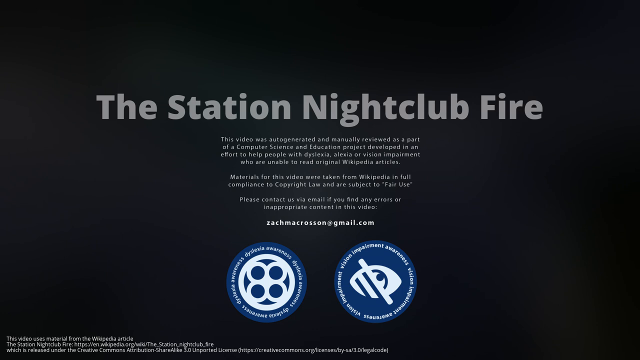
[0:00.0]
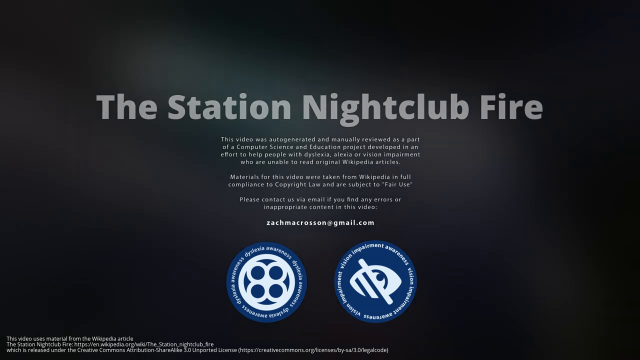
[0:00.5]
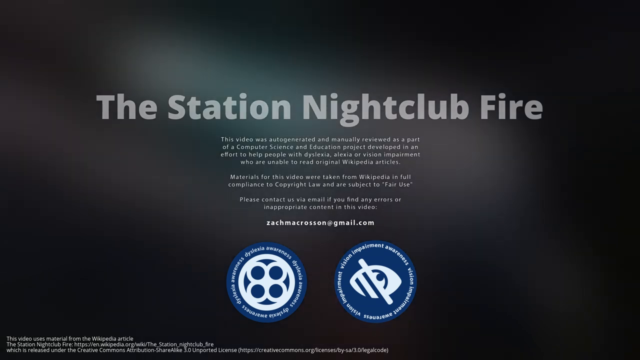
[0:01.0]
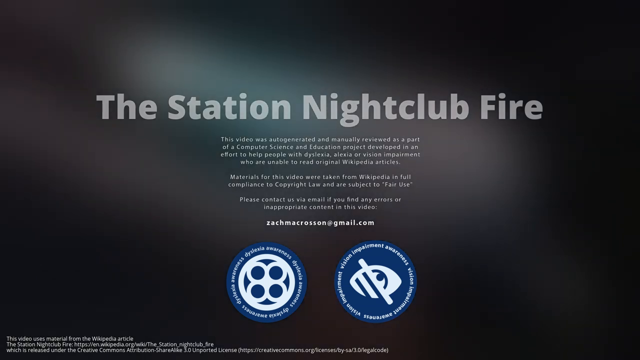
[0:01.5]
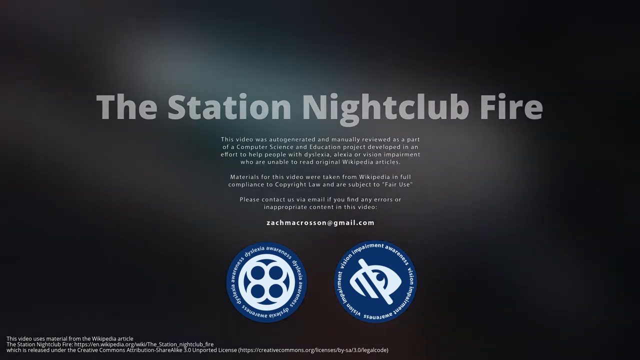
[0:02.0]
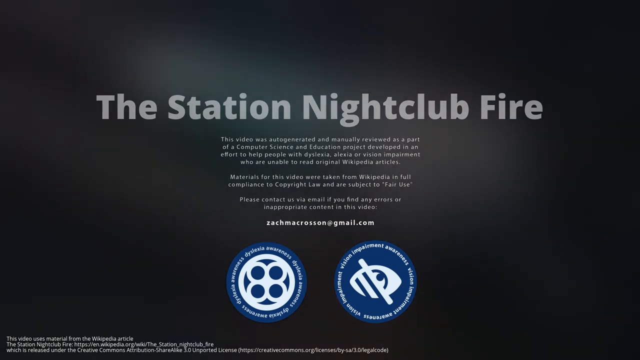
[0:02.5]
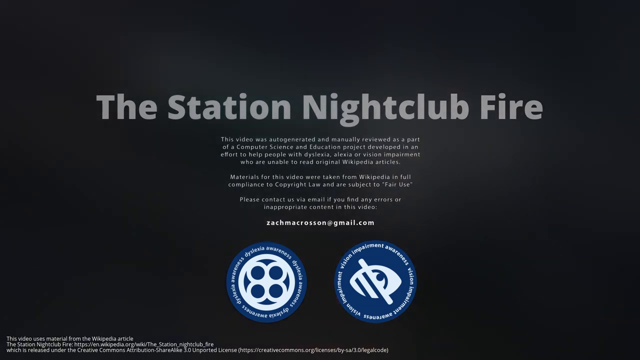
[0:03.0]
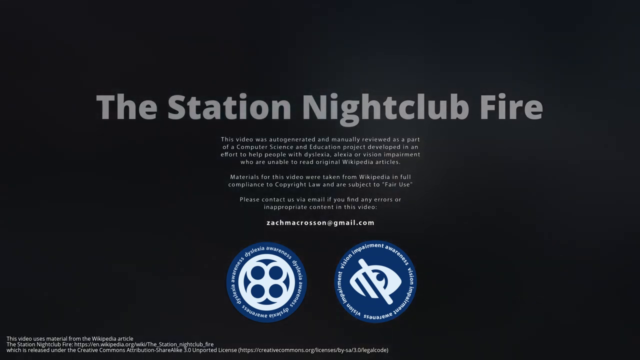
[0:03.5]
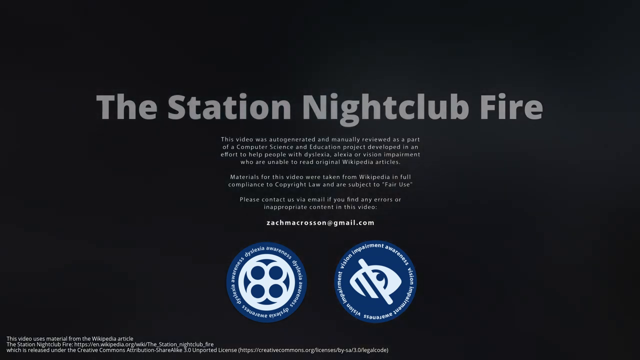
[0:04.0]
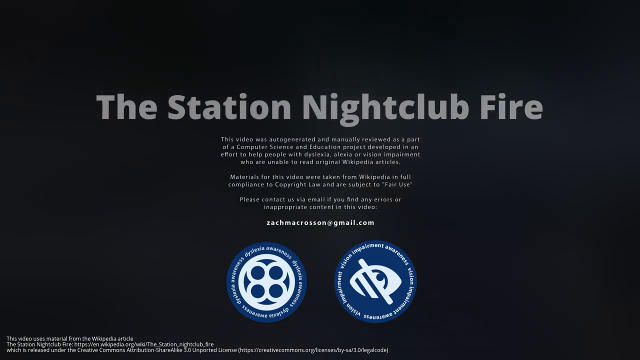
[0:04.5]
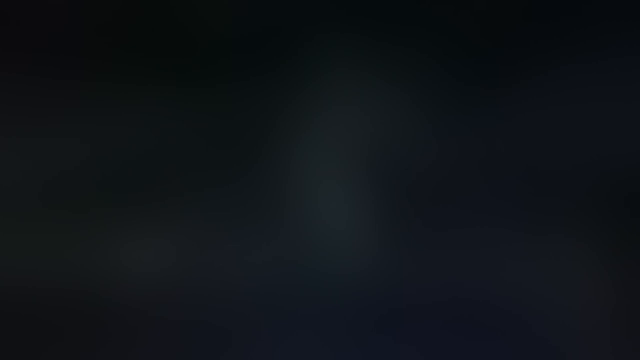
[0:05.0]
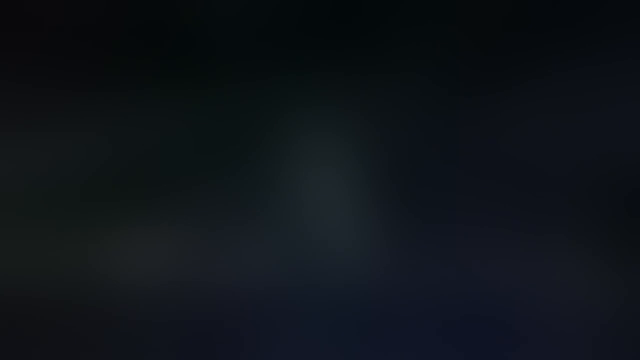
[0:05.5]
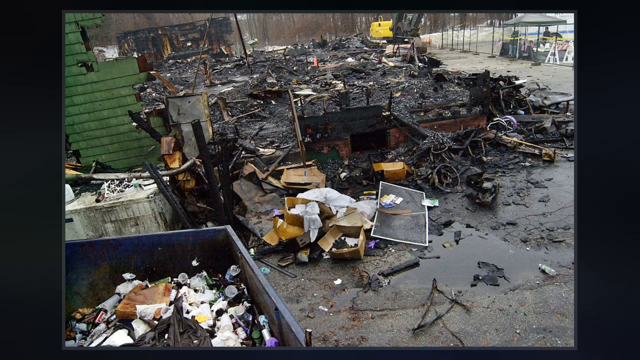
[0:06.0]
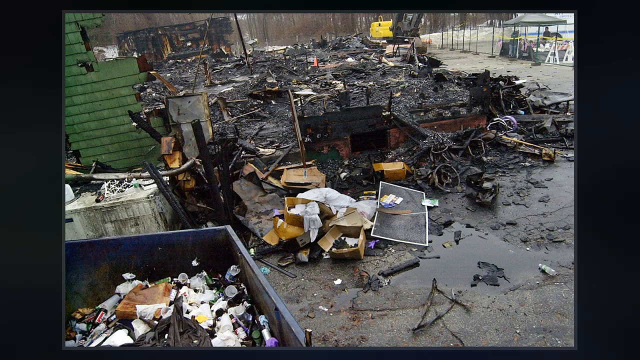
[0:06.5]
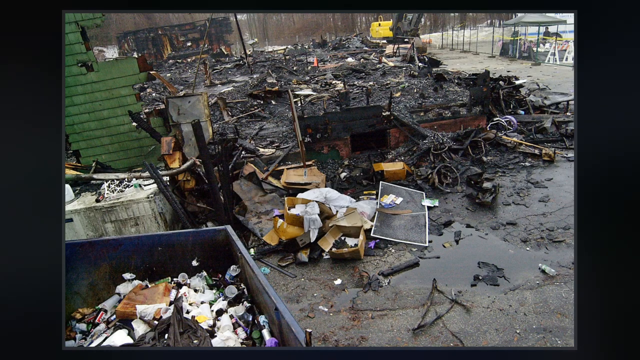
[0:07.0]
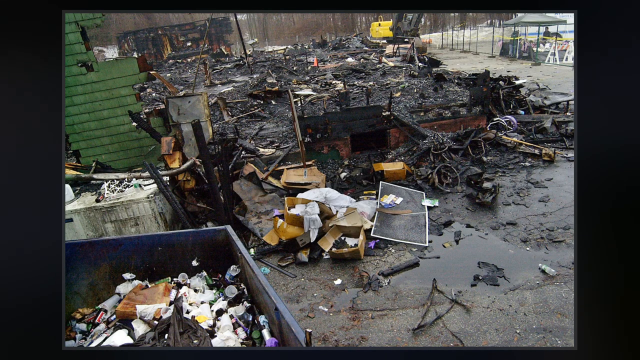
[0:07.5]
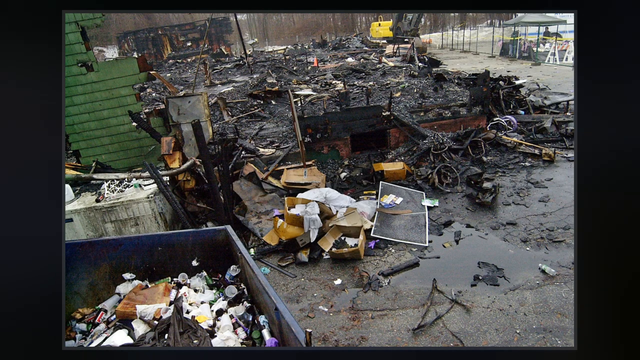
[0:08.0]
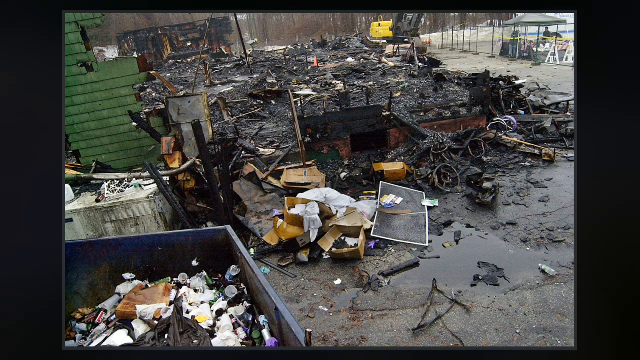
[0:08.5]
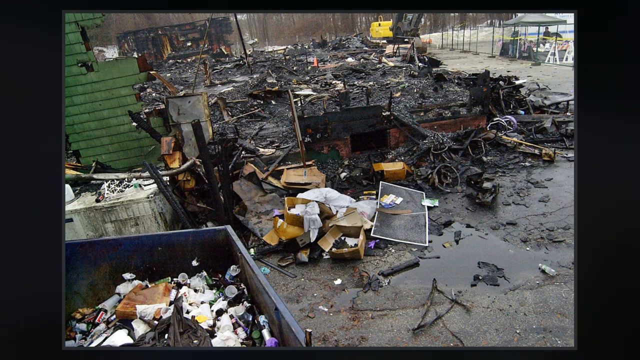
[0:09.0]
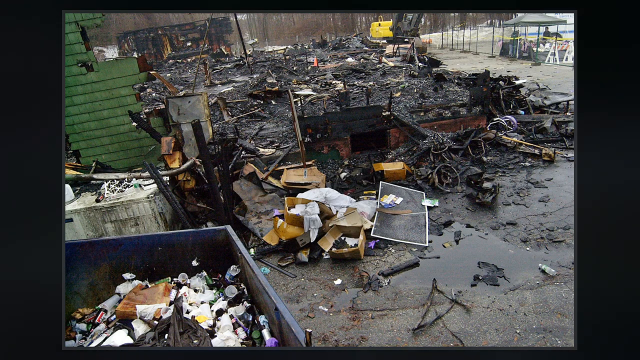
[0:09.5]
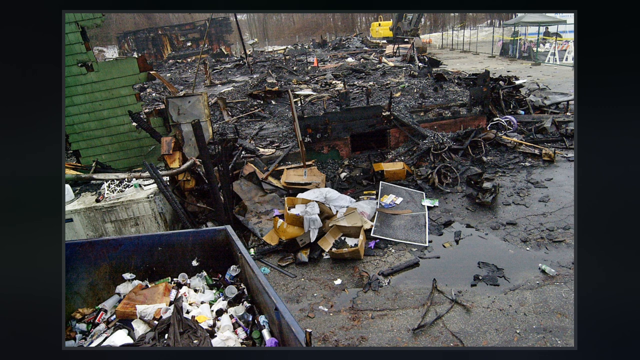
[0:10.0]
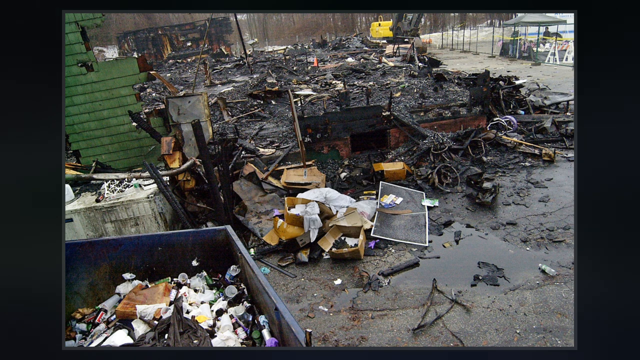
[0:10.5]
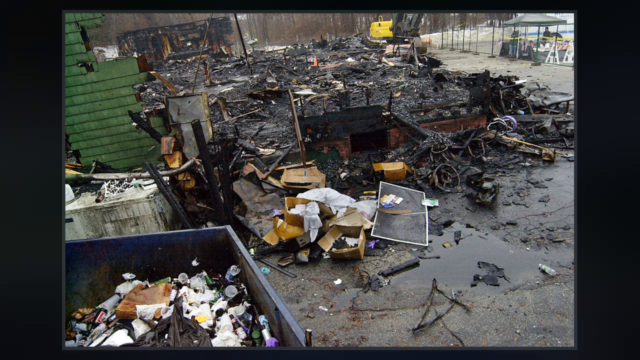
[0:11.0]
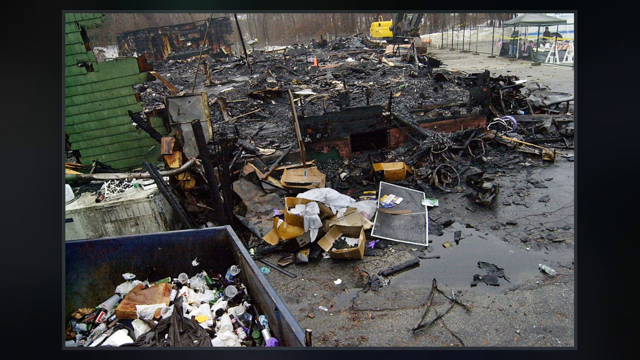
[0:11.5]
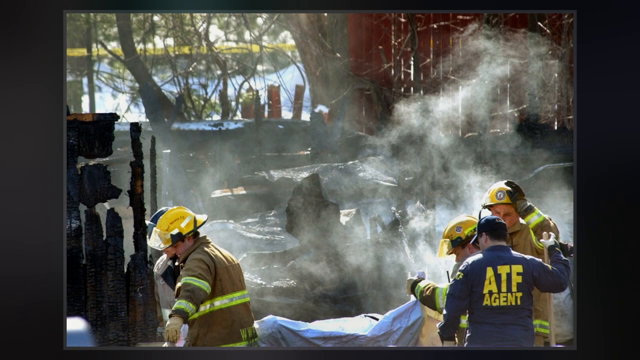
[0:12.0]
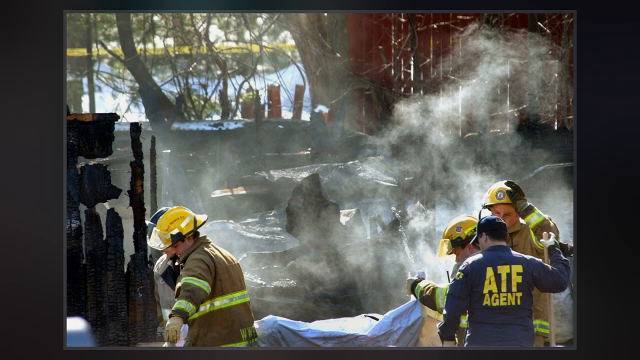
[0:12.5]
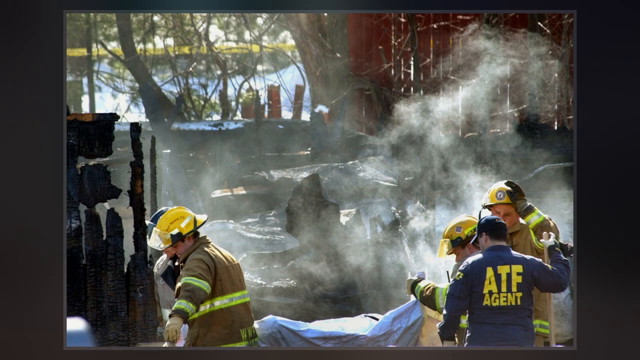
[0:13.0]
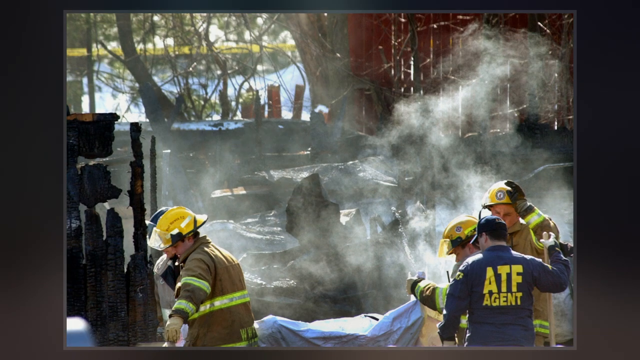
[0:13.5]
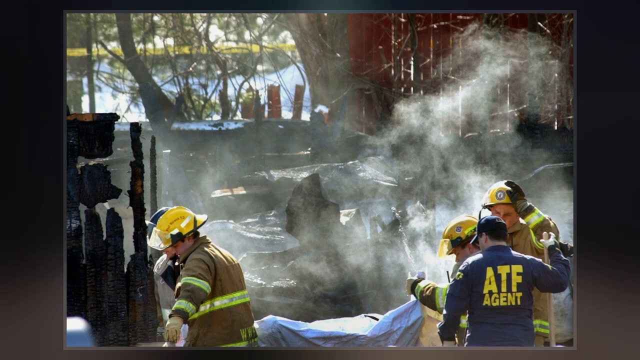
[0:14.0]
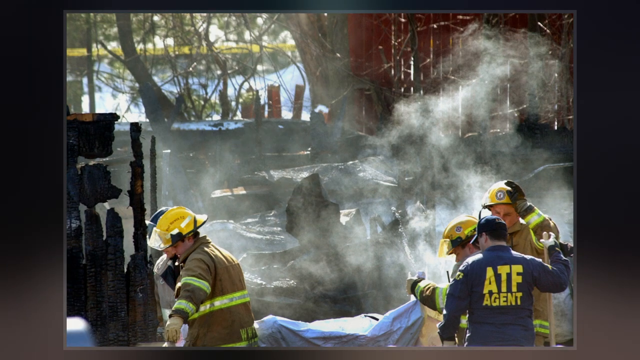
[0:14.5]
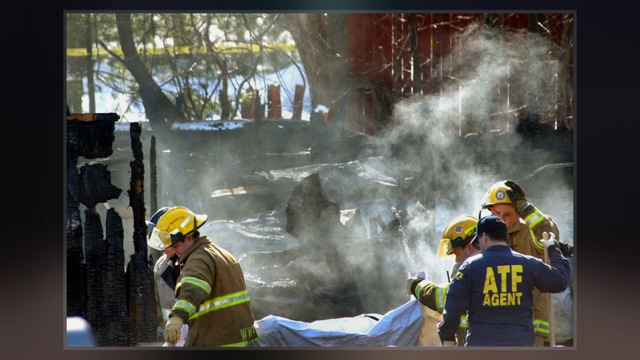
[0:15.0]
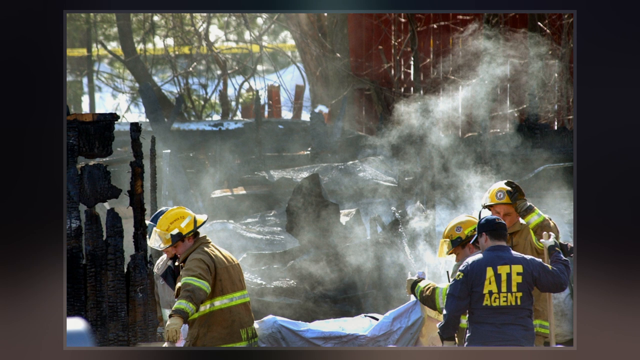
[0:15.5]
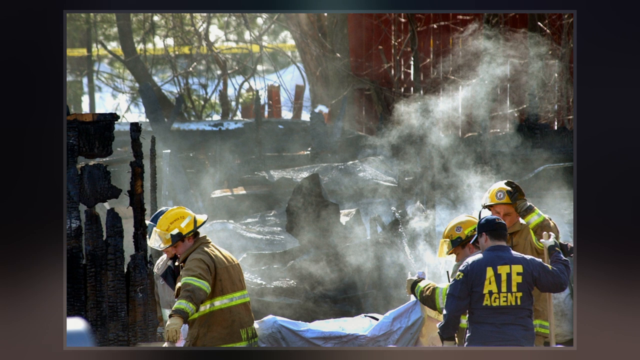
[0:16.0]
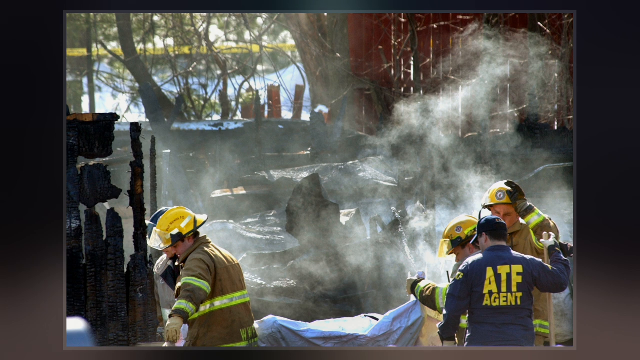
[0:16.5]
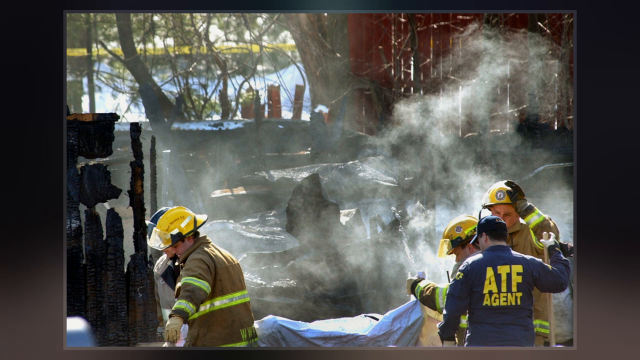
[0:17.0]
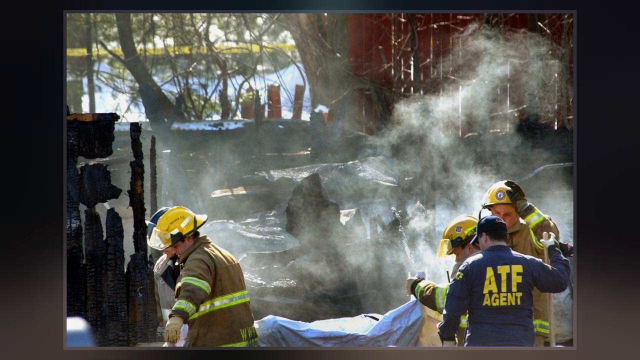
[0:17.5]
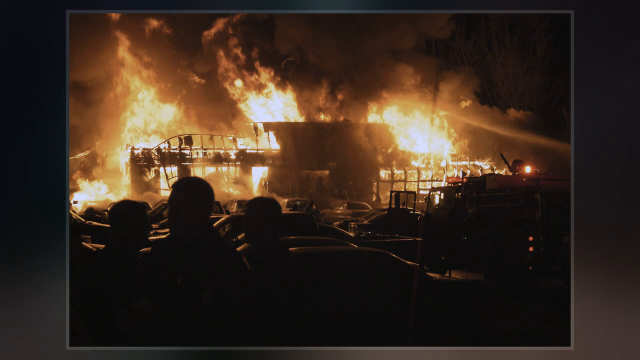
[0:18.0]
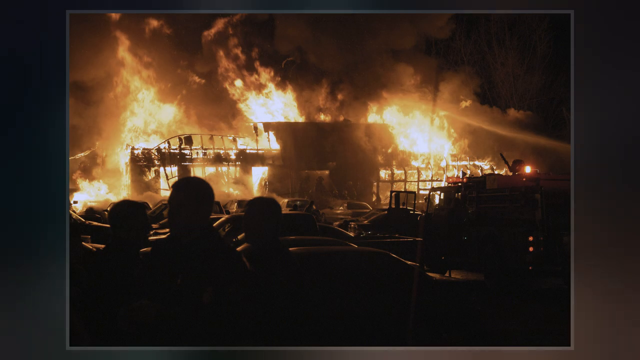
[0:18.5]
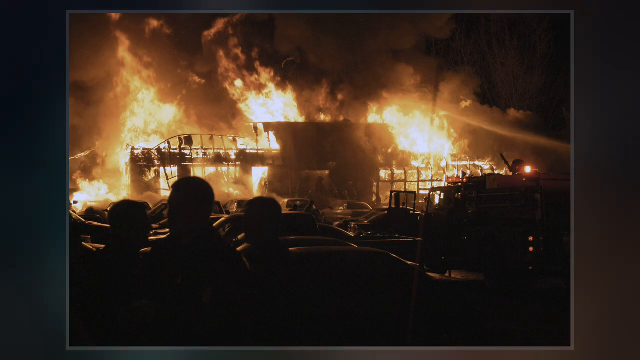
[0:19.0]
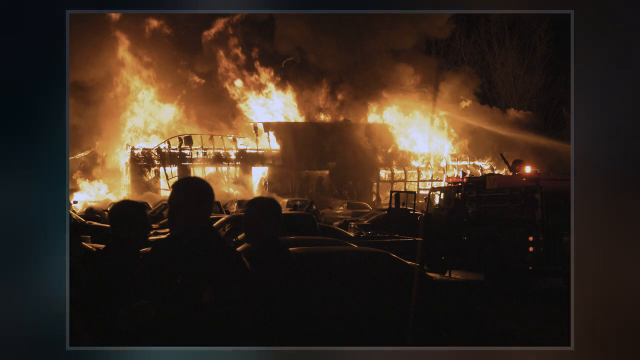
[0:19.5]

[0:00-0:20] White text on a black background reads "the station nightclub fire." Below it is some smaller white text that is difficult to read, and underneath that are two blue logos, one of which has an eye with a line through it. The video then cuts to a still image of what looks like the aftermath of a fire: there is a broken wall, and lots of charred bits of different objects and materials are on the ground. It looks like there has been a building fire. Another still image follows, showing firefighters who look like American firefighters, judging by their uniforms, working in charred remains with some smoke around. There are three firemen in uniform, plus one person in a uniform that is not a fireman's uniform, wearing what looks like a blue jacket with "ATF agent" in yellow text on the back.